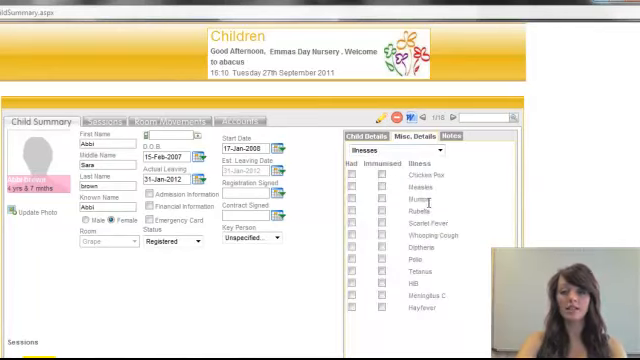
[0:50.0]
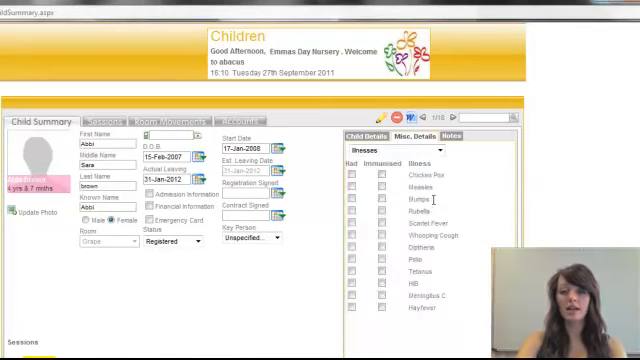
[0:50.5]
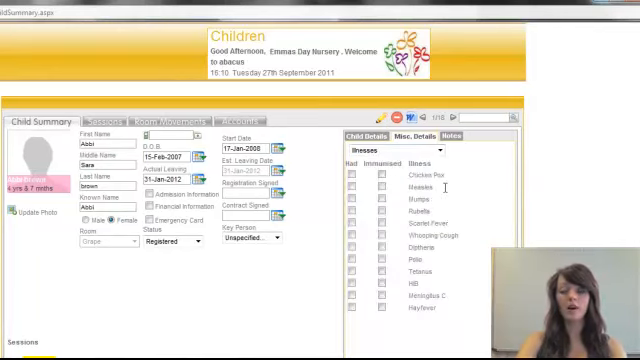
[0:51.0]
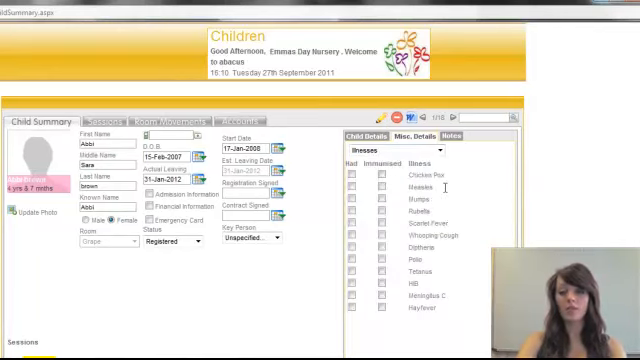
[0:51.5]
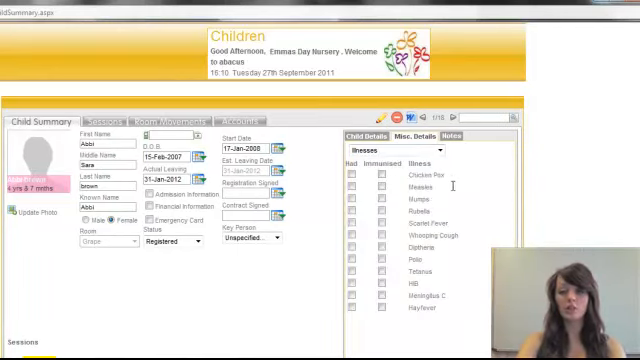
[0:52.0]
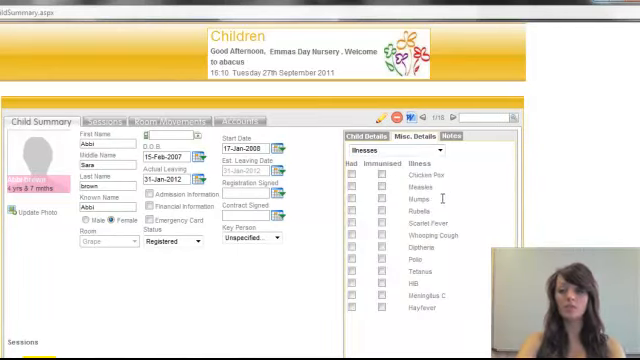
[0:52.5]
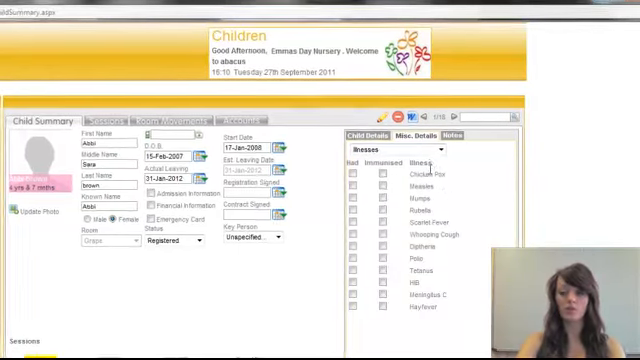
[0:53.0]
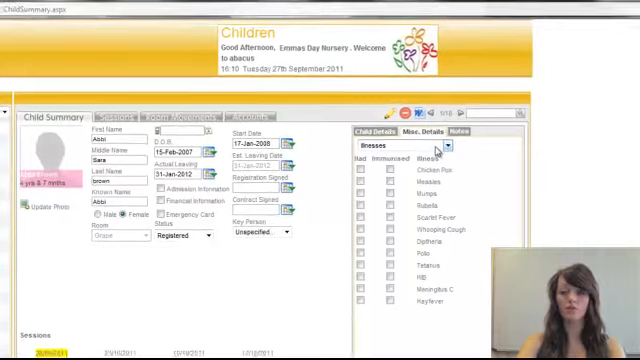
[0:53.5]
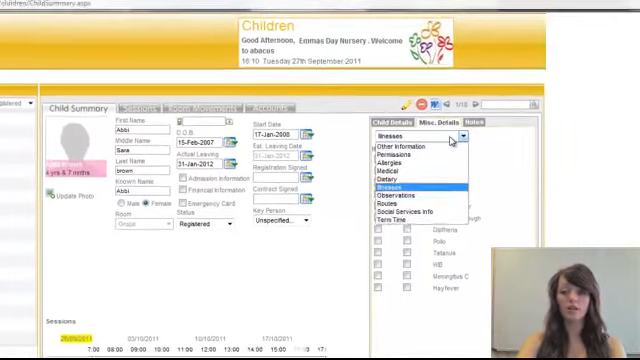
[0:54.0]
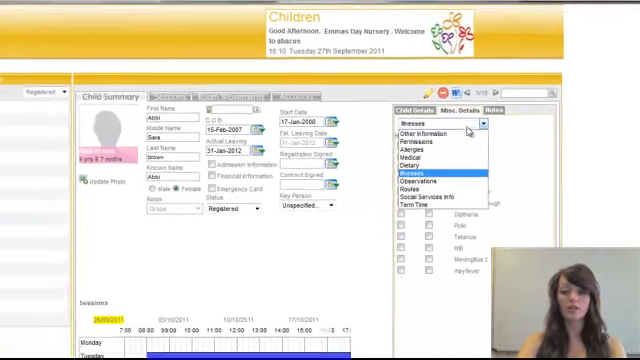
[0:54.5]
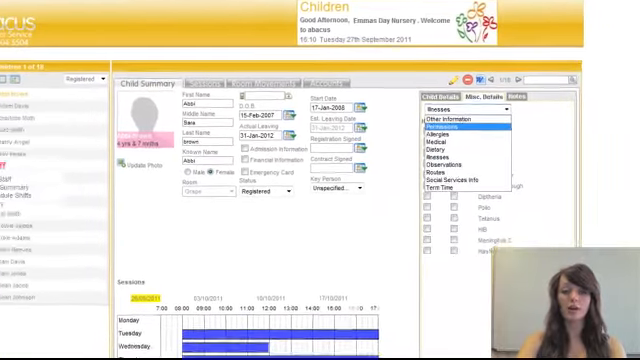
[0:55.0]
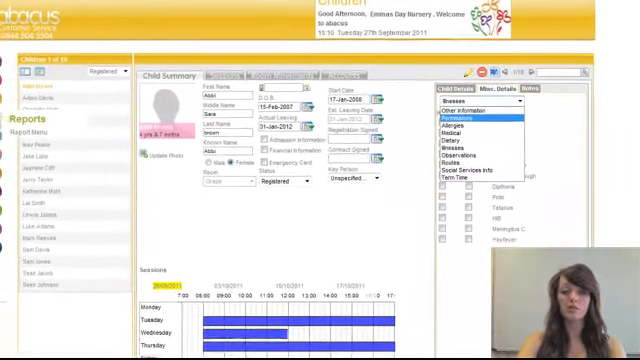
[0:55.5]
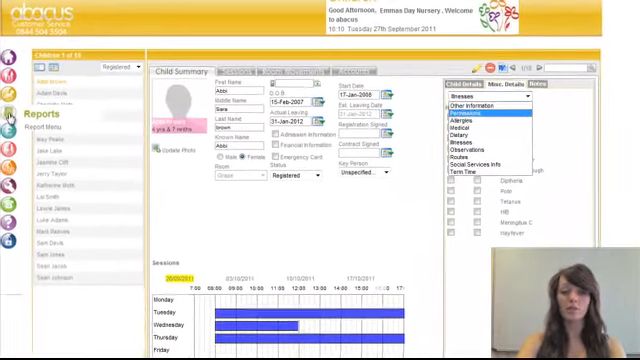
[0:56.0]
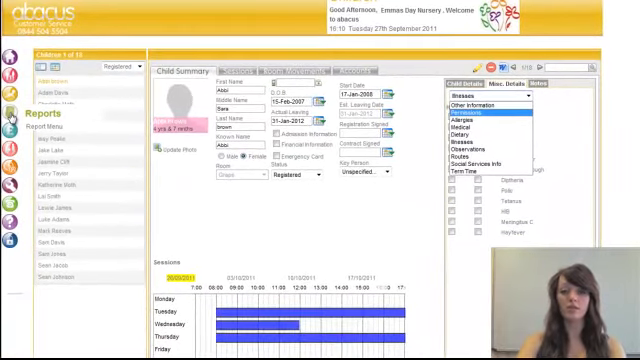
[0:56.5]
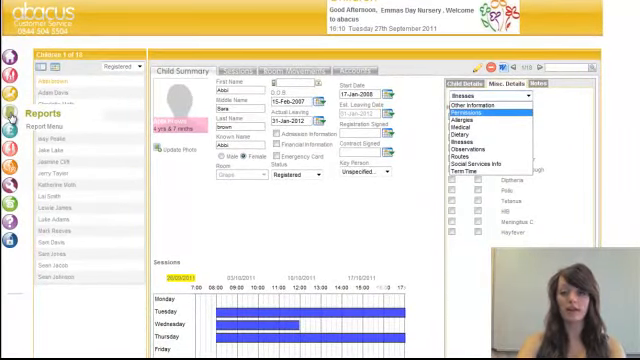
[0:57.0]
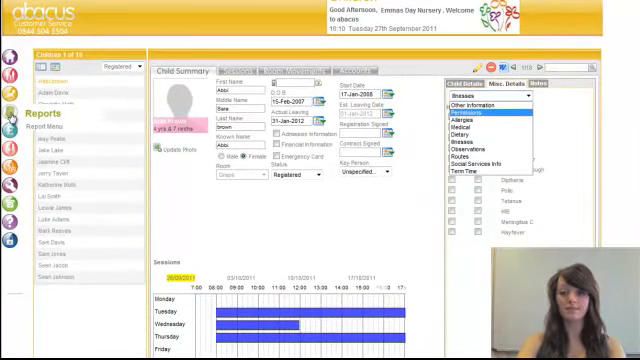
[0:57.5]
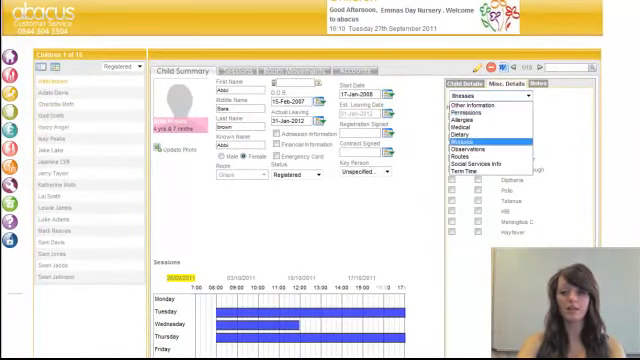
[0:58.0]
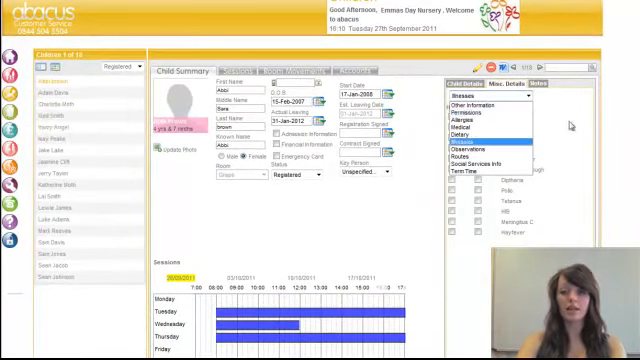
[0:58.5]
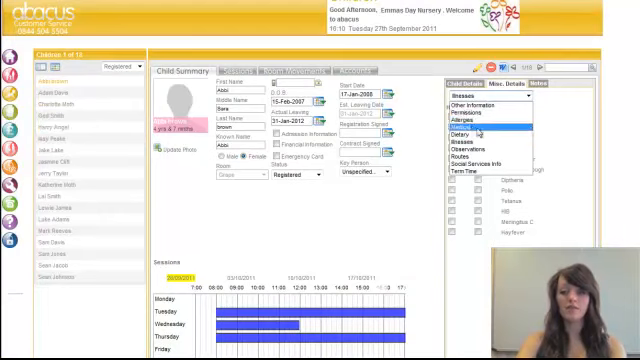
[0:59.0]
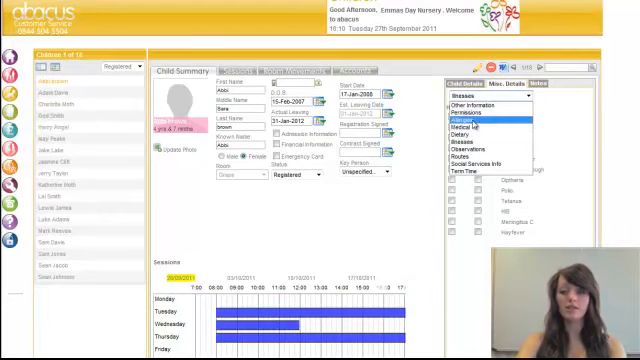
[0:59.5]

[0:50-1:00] The woman is visible in the lower right of the screen. She has long brown hair, dark eyes and a big mouth. She goes into the details and now chooses allergies. In the upper part of the site there is text including "Children", "good afternoon, Emma's Day Nursery" and "welcome", along with an icon of flowers and the text "welcome to Abacus". A list of illnesses is shown, including scarlet fever, whooping cough, polio and meningococci.